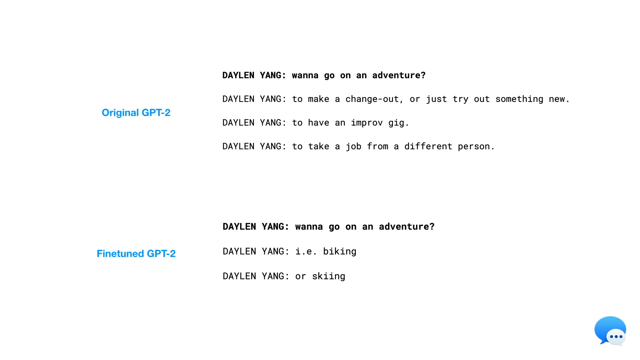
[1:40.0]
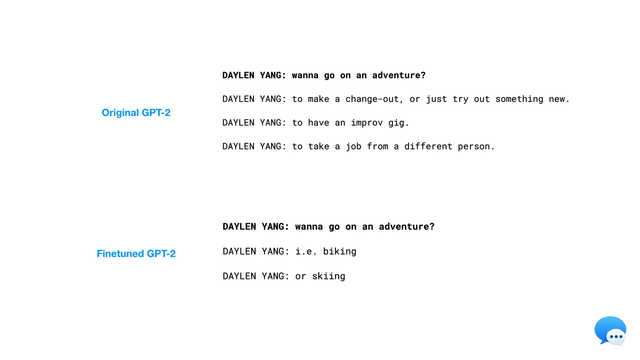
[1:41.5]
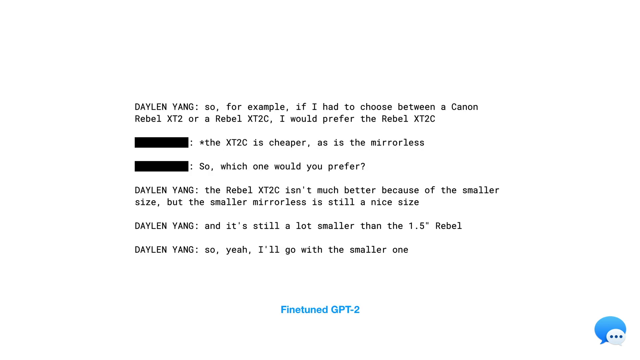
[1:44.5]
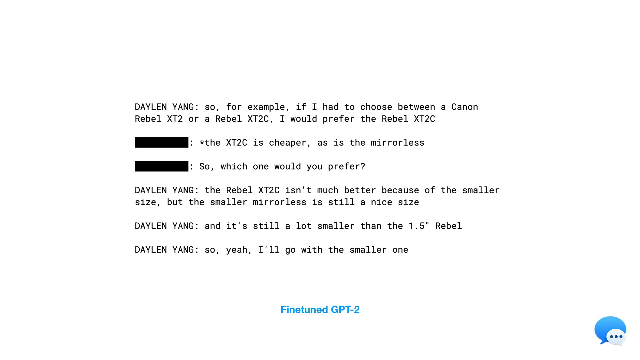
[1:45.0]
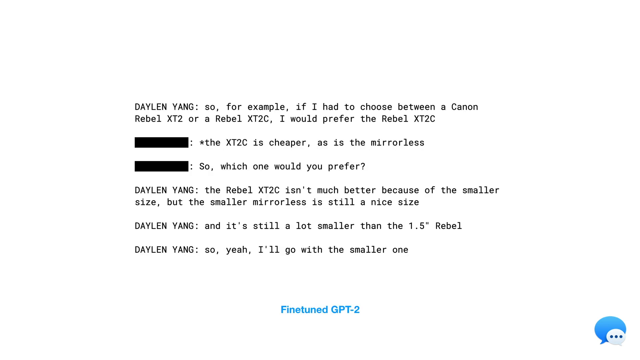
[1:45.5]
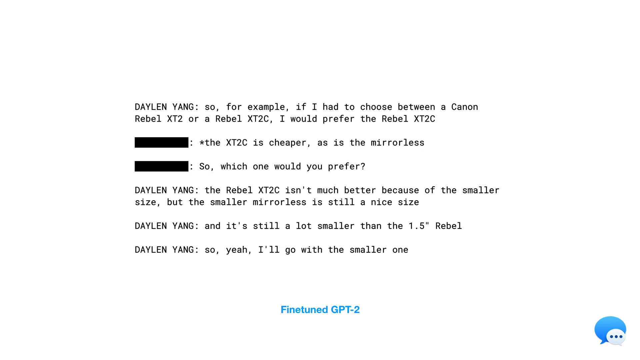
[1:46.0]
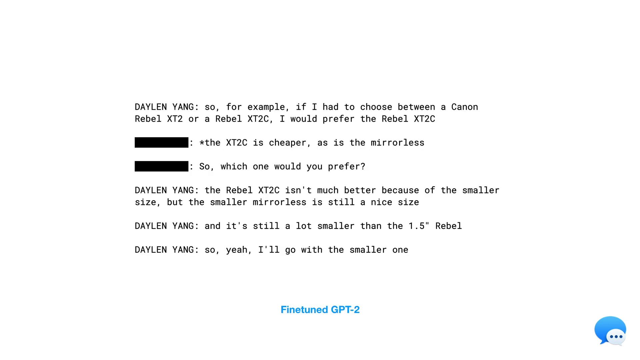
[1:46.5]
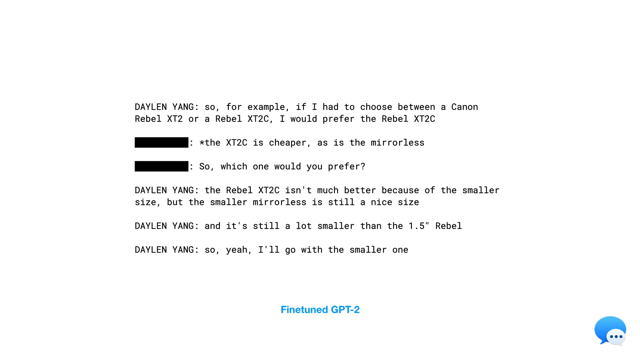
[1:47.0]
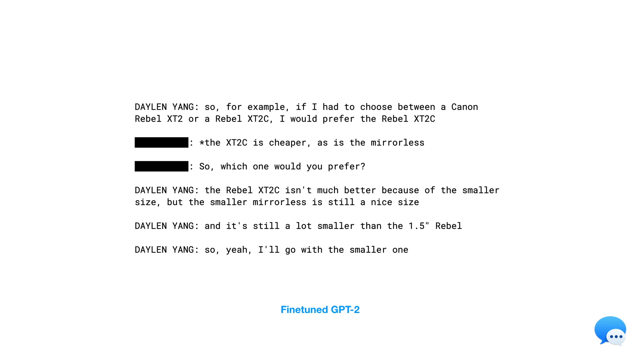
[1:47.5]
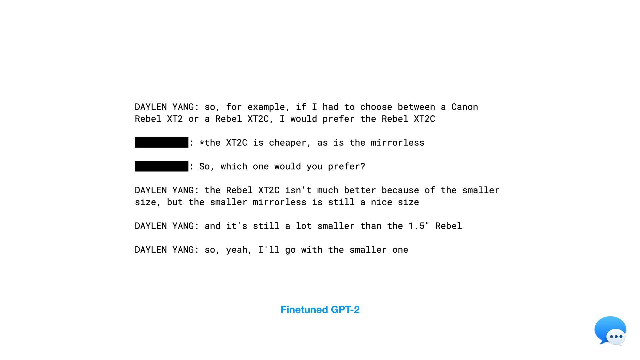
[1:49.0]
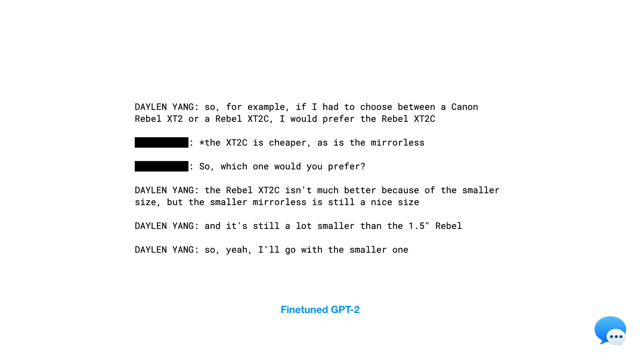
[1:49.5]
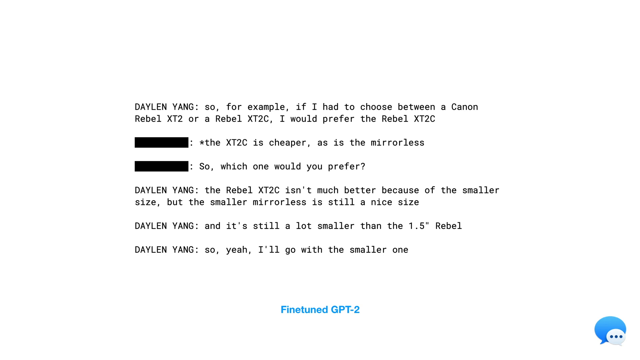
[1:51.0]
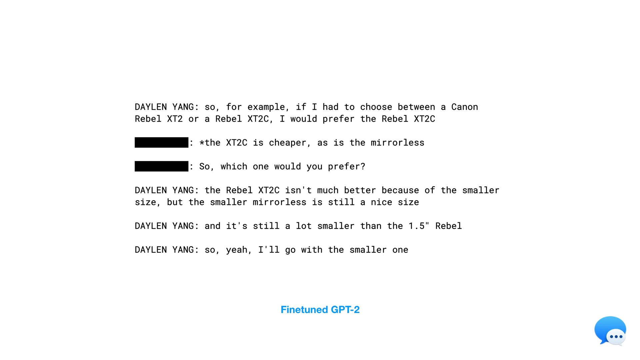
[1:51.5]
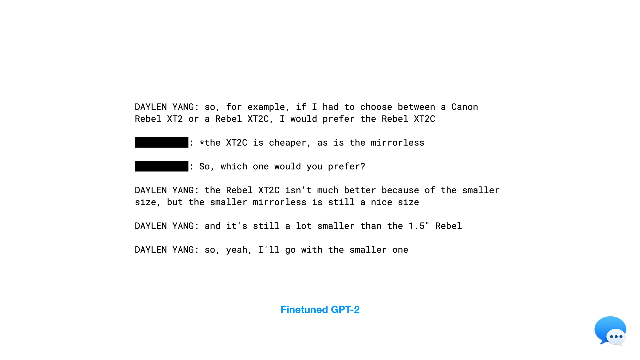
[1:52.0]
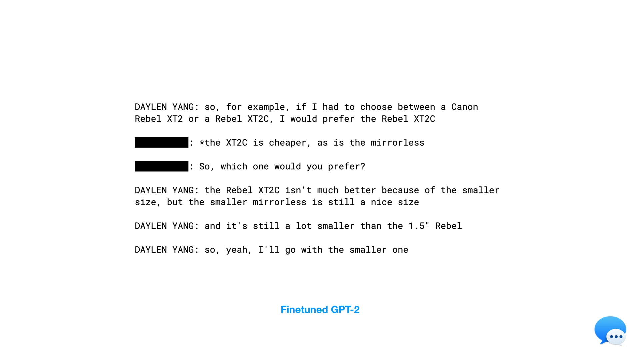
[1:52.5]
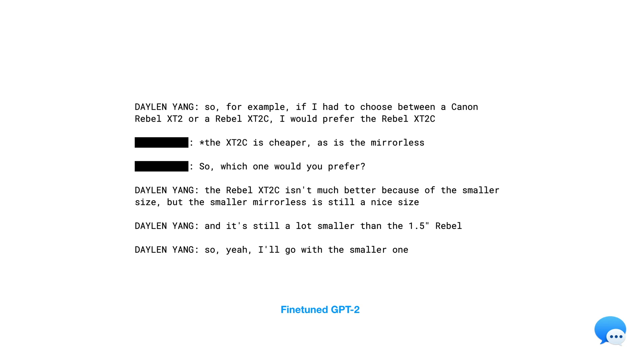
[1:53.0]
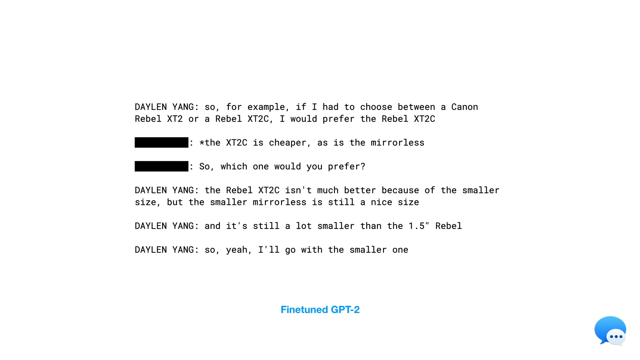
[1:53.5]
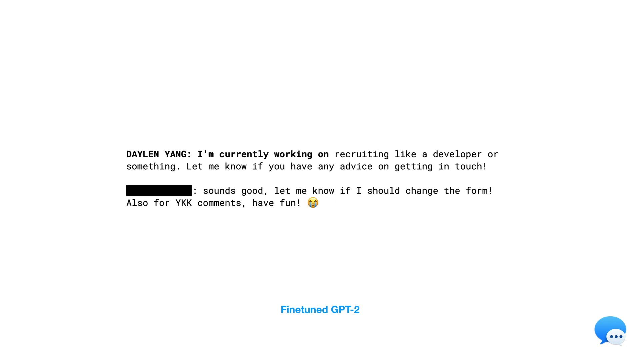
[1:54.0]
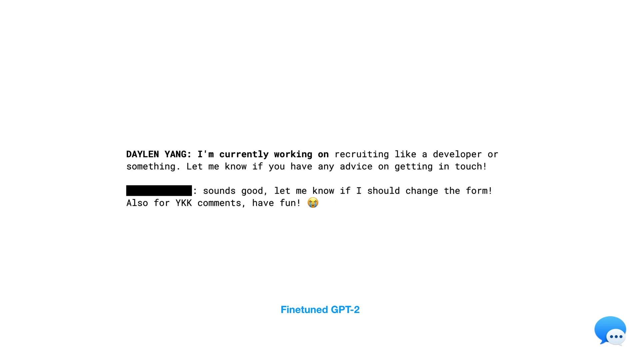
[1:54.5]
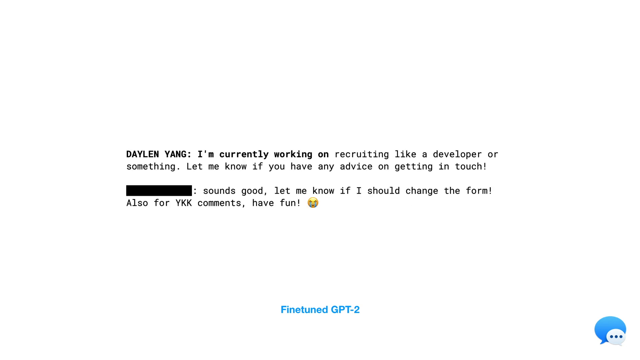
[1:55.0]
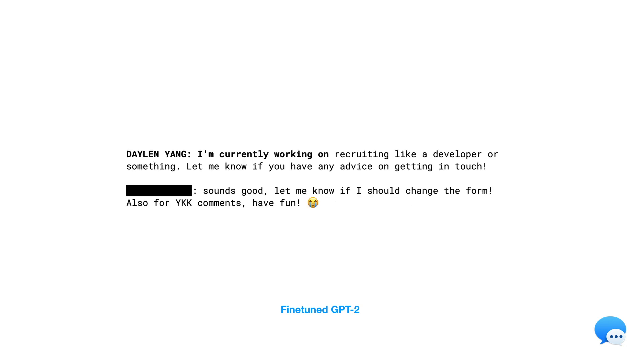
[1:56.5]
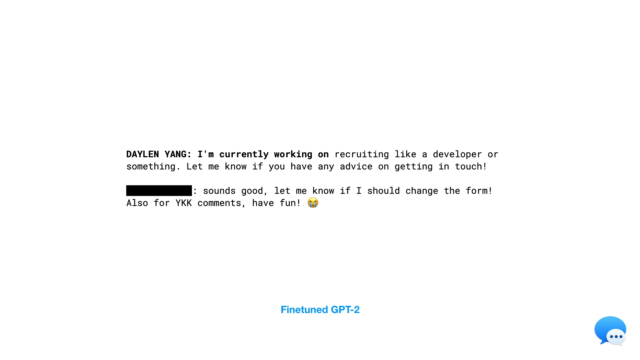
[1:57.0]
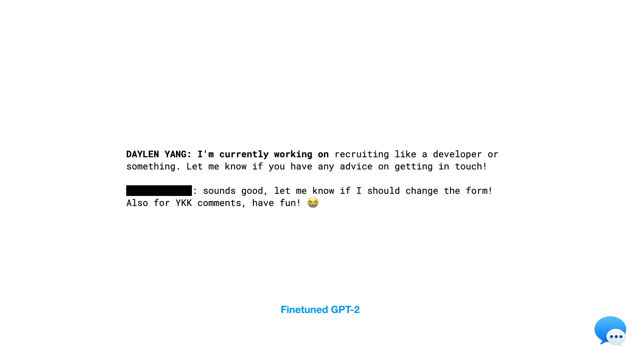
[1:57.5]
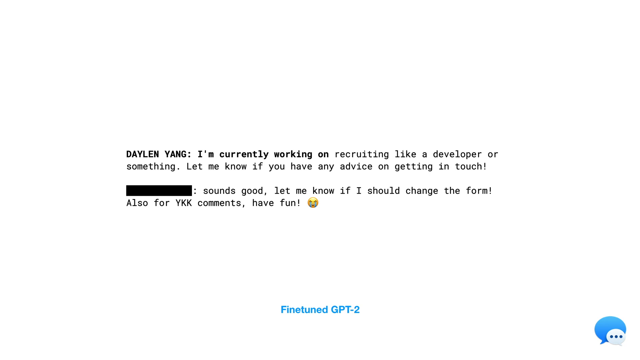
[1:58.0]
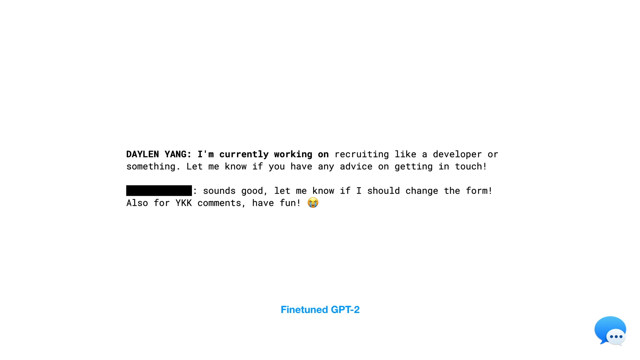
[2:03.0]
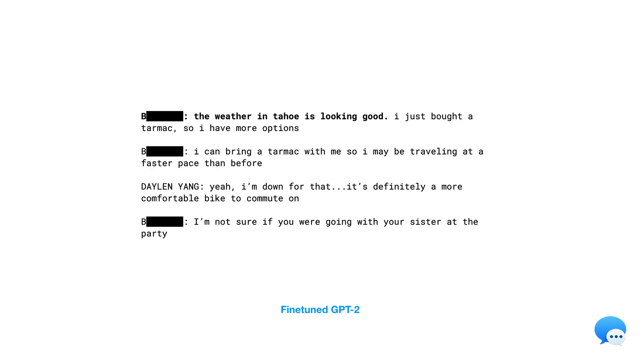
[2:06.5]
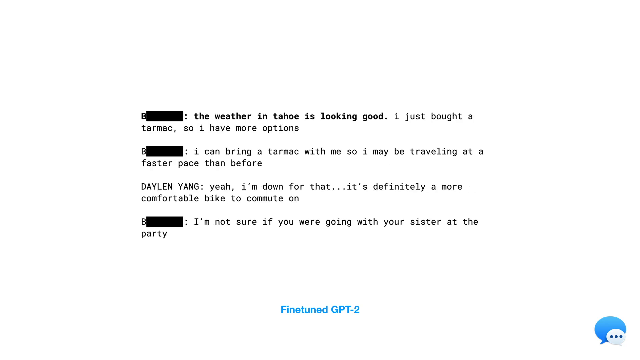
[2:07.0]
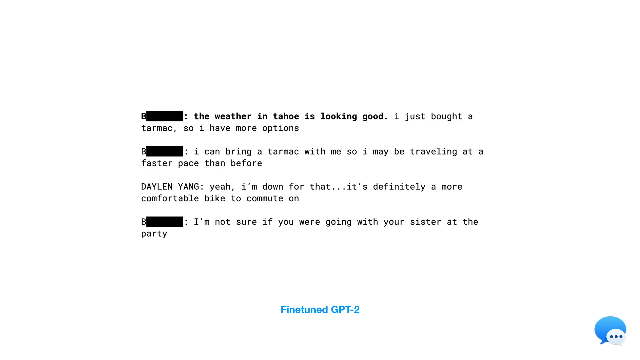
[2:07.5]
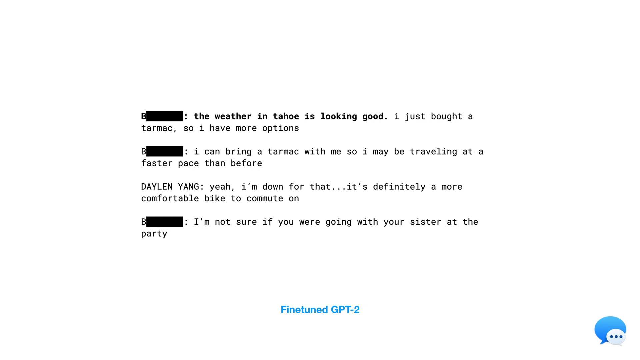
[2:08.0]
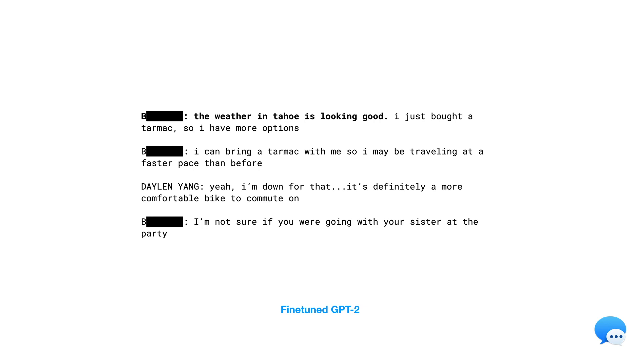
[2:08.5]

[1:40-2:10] A slide shows a fine-tuned GPT-2 conversation in which Dylan asks GPT-2 for its opinion about what is apparently a Canon camera, the Rebel X-T2 or the Rebel X-T2C. GPT responds that the X-T2C is cheaper and asks Dylan which one he prefers, and Dylan replies with the one he likes and is going to go with. After about five or six seconds the video cuts to another conversation from Dylan to GPT about recruiting a developer, in which he asks how to get in touch with somebody. GPT responds about whether he should change some type of form, says something about YKK comments, and uses a small smiling emoji. After several seconds the video cuts to another screen with a conversation with Dylan apparently about the weather, in which he seems to be traveling.